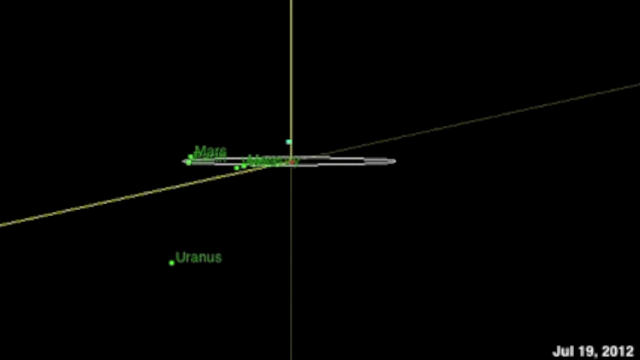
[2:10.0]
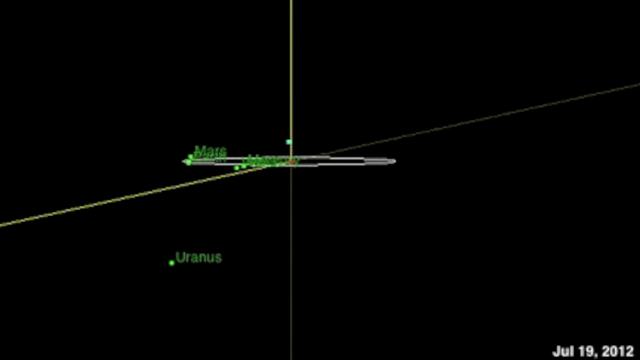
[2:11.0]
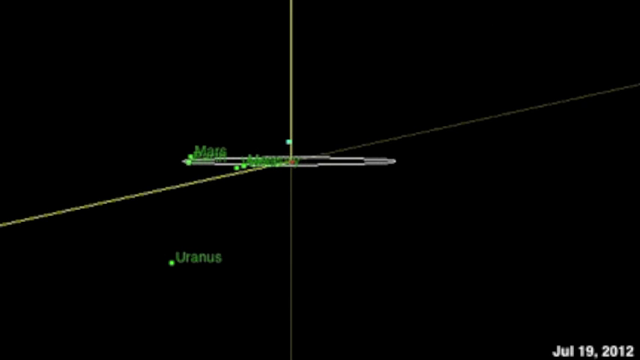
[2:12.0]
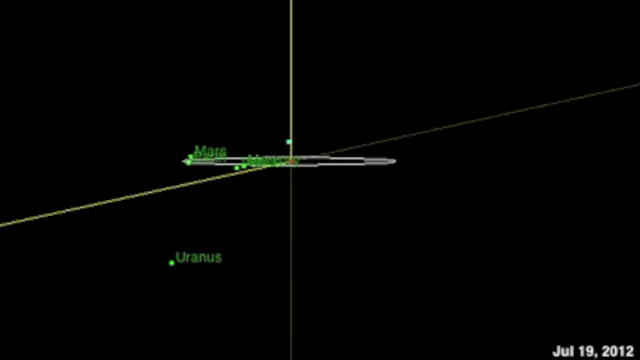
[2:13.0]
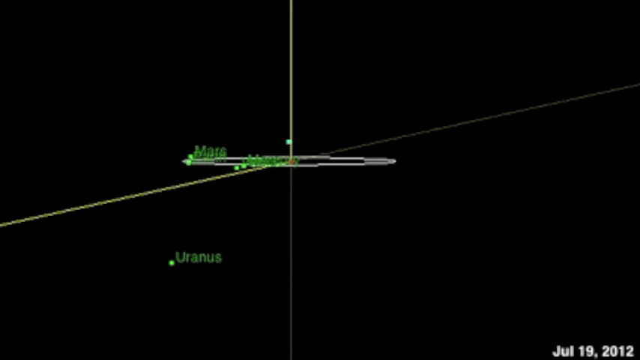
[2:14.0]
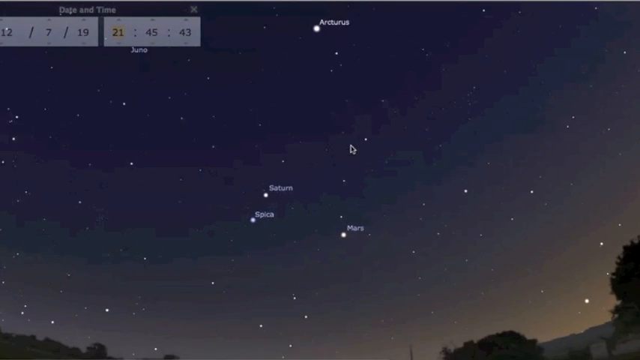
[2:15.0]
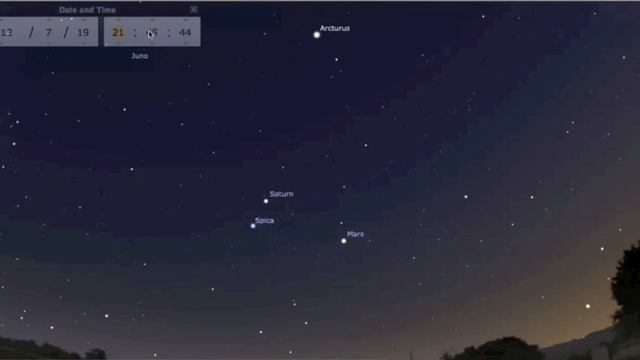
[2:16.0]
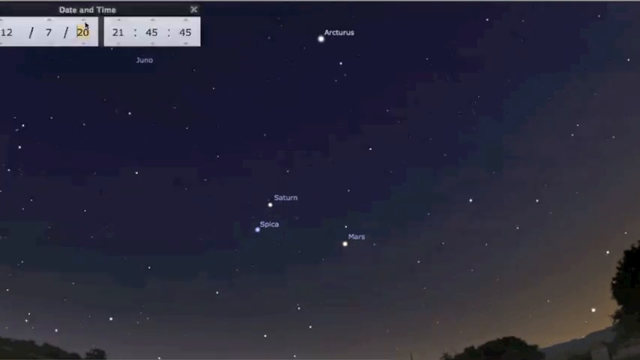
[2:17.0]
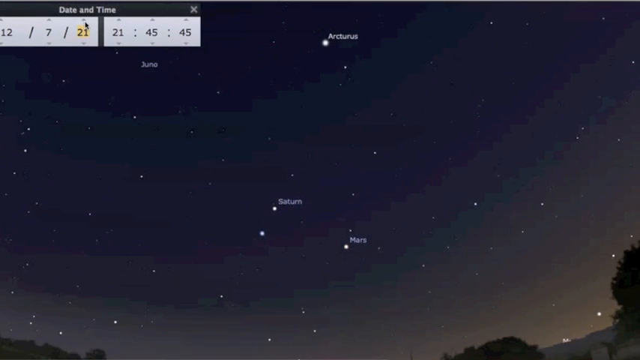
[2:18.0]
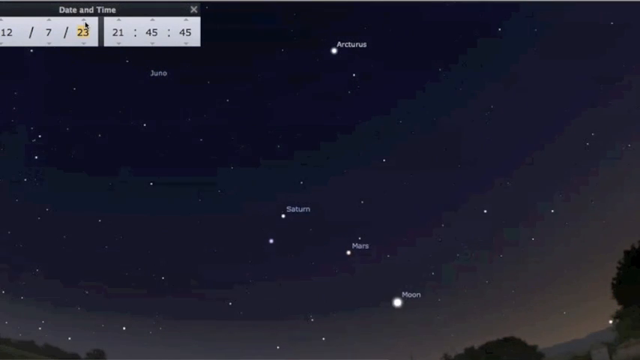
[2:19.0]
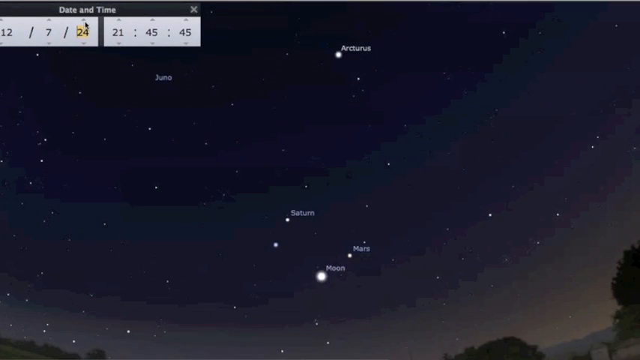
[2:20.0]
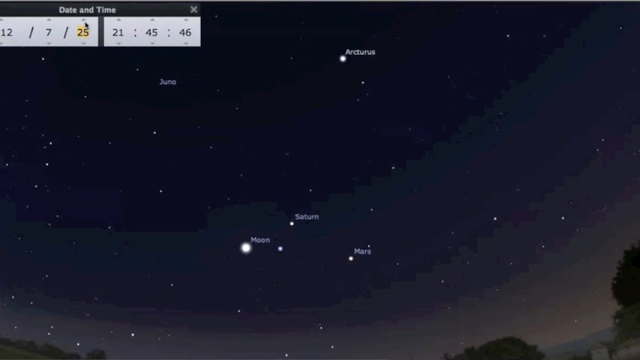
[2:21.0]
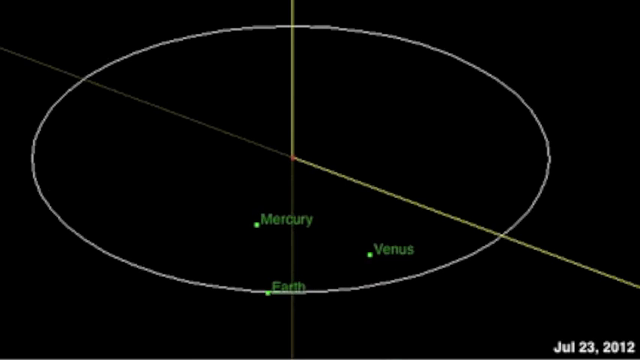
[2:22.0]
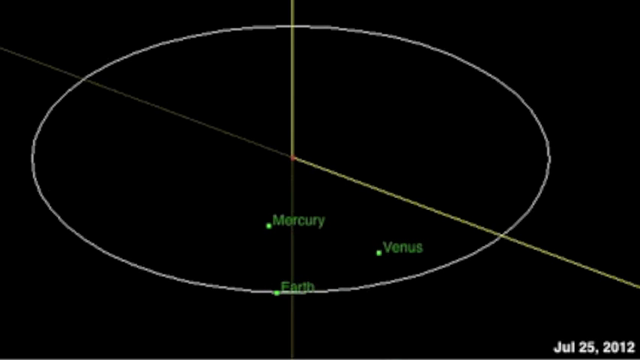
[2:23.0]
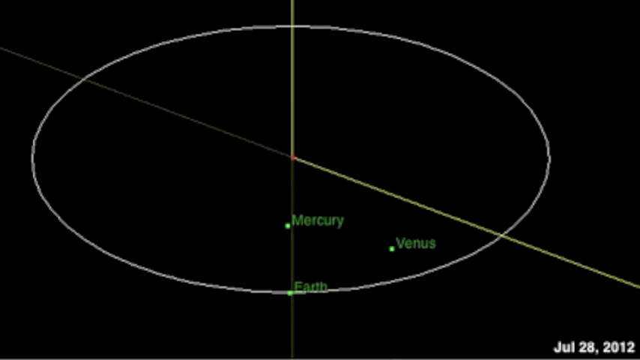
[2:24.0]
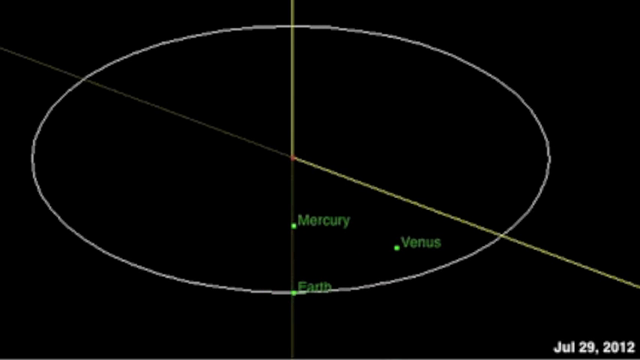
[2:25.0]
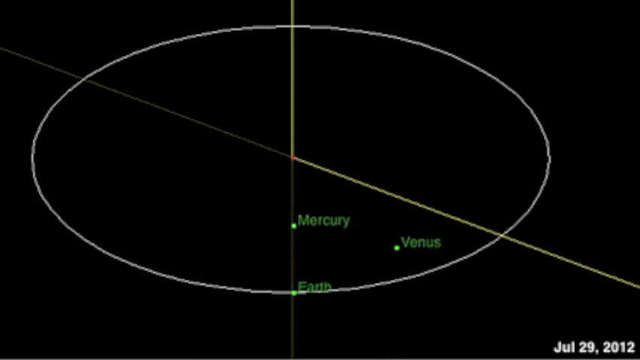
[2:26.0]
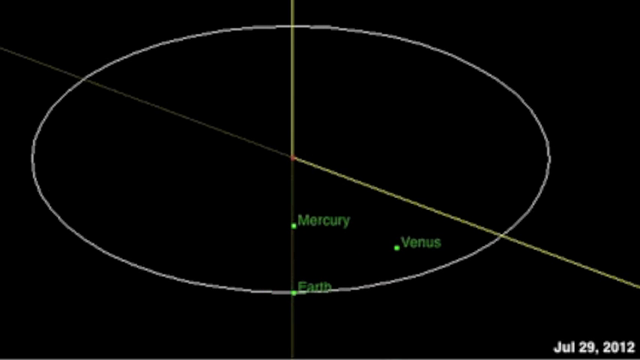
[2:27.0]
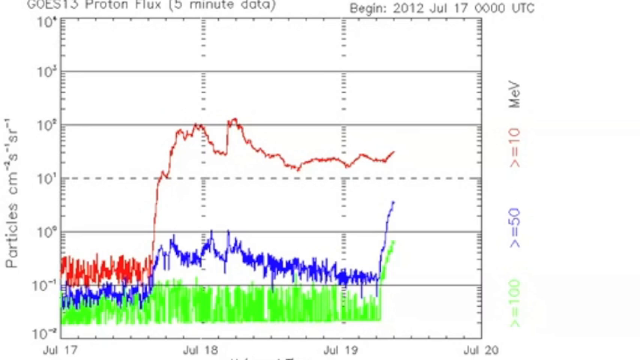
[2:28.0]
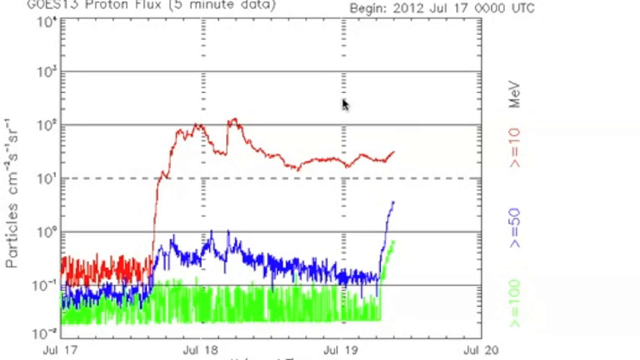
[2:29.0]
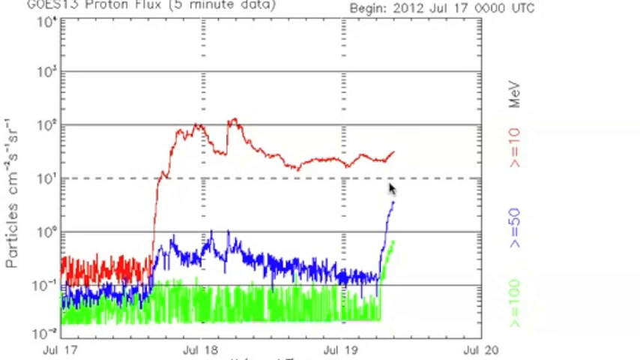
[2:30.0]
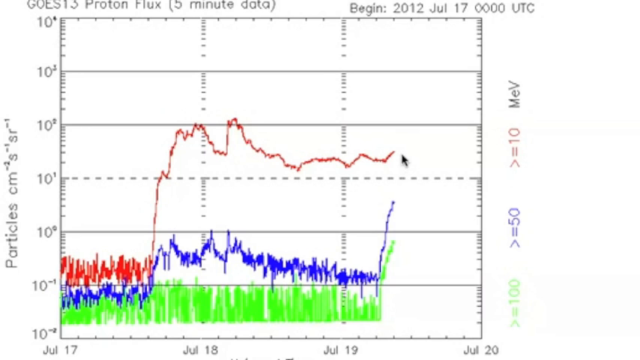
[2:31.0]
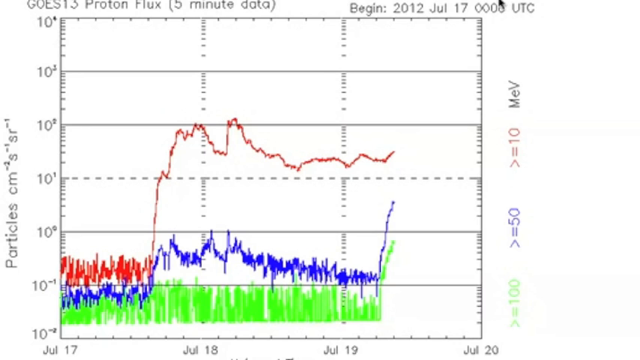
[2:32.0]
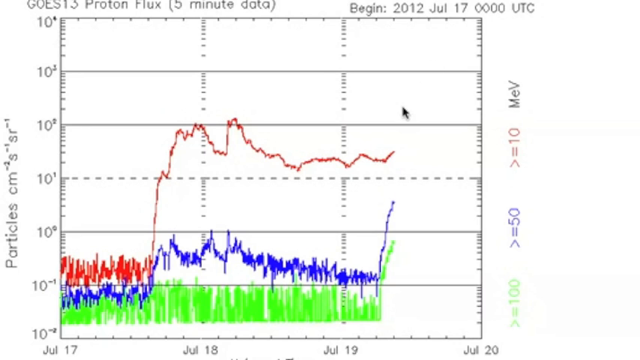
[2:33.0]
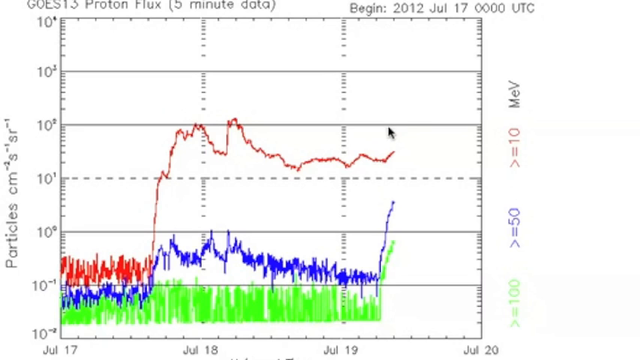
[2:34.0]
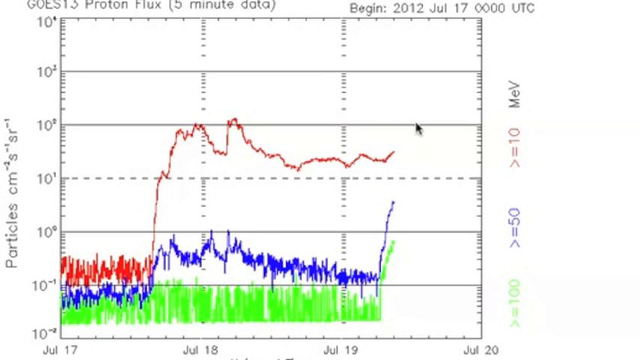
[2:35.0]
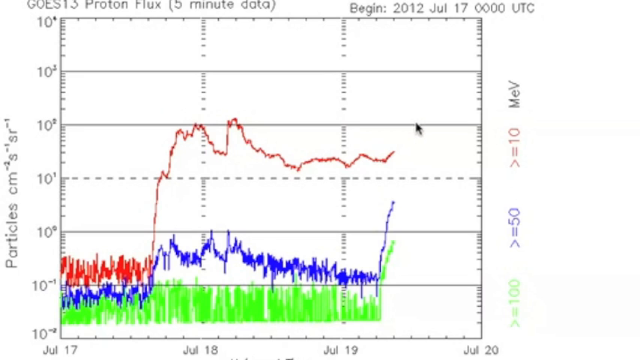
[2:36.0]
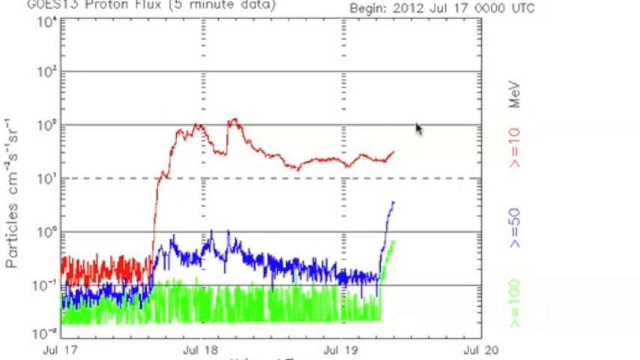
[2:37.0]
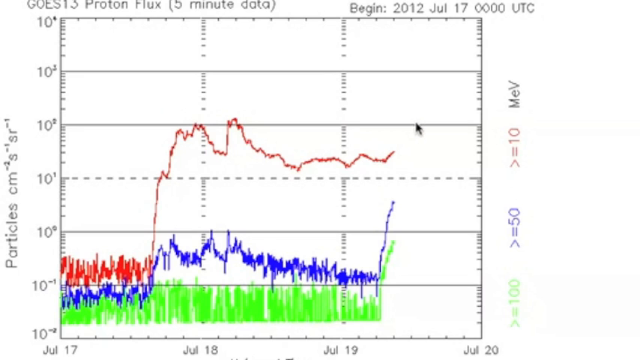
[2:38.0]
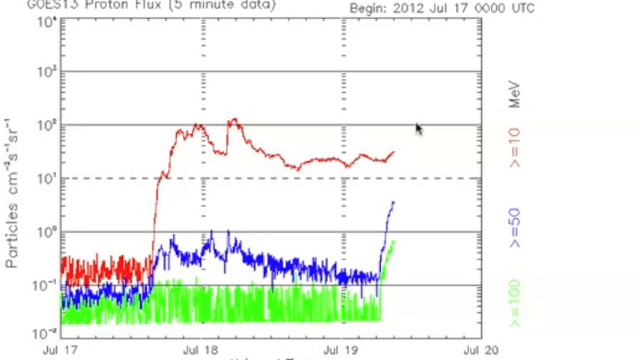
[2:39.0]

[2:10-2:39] The black screen reads "Uranus," "Mars," and something else, maybe "Jupiter." Next is what looks like a constellation of some sort, with the camera moving a bit. Stars appear against a dark, graded background: a very dark blue half circle at the top, then an almost rainbow-like band of less dark blue, growing consistently lighter toward the bottom right corner, where it turns almost golden or brown. A few things are pulled out, apparently stars or planets, but their labels are too small and blurry to read, and the screen moves a little. The black screen returns, now with "Mercury," "Venus" and "Earth" in green with little bullet points, inside a white circle that moves slightly, almost as if rotating. The video then returns to the graph: the green squiggly line runs along the bottom, the blue squiggly line is fairly static, goes up slightly and continues to the right, and the red line just above it makes a big jump and then stays fairly static.